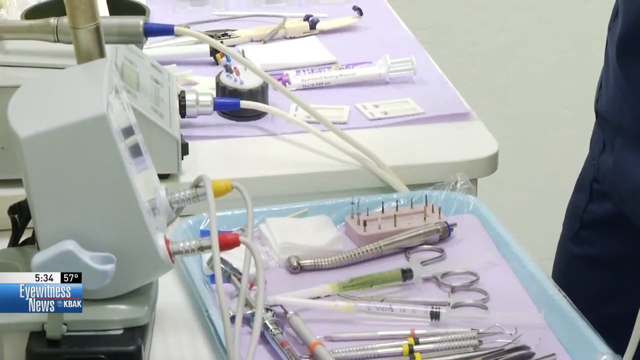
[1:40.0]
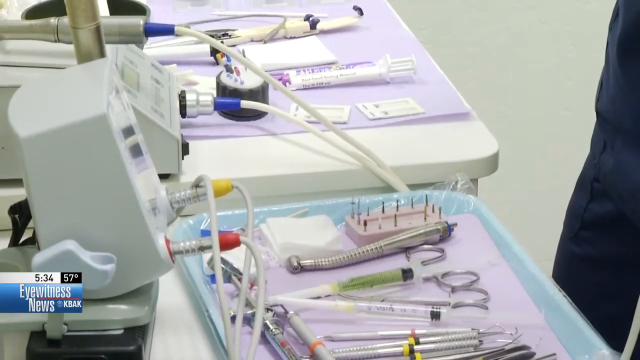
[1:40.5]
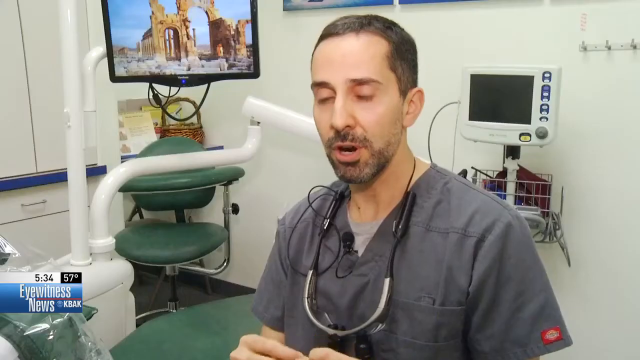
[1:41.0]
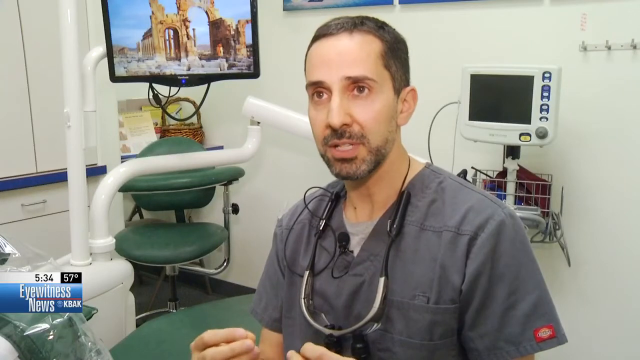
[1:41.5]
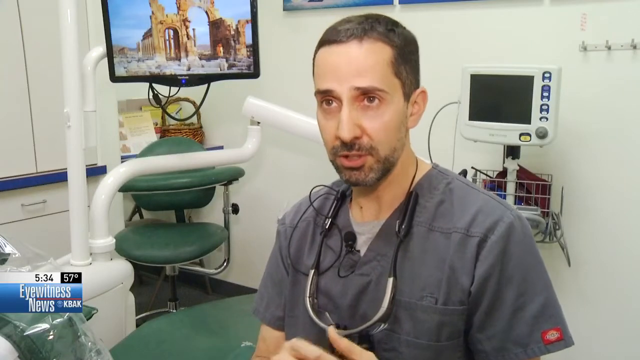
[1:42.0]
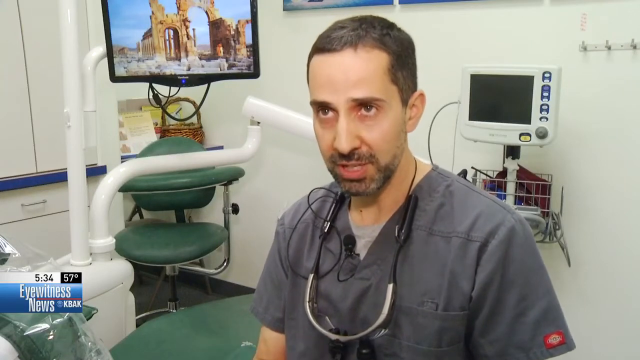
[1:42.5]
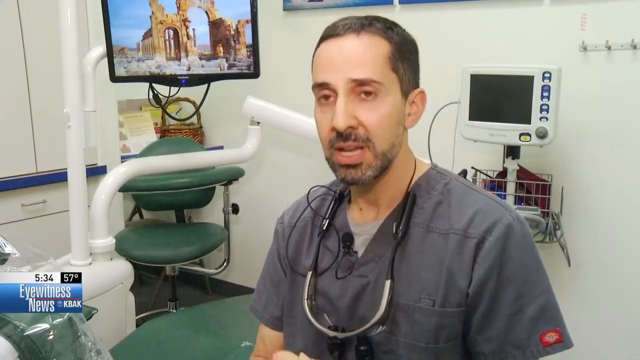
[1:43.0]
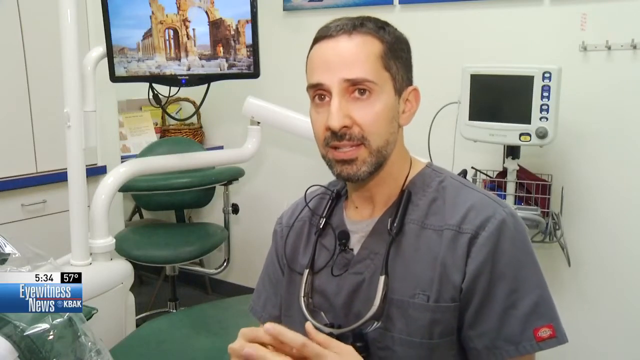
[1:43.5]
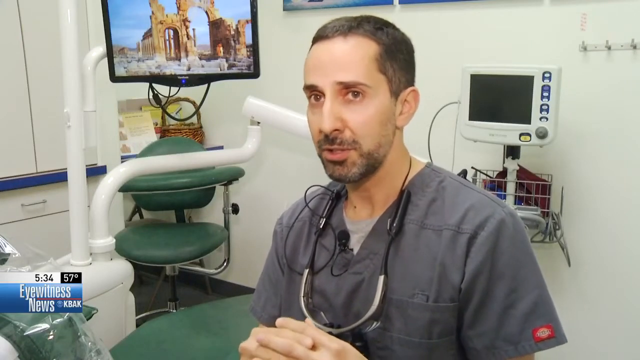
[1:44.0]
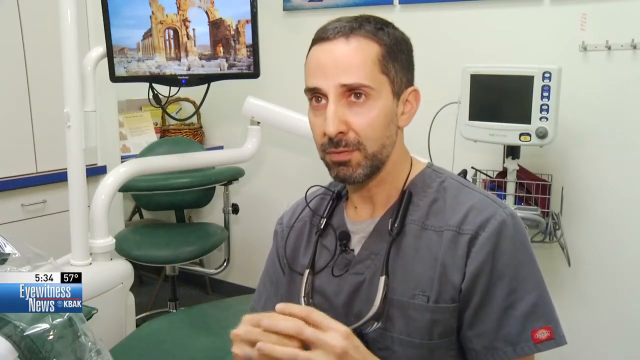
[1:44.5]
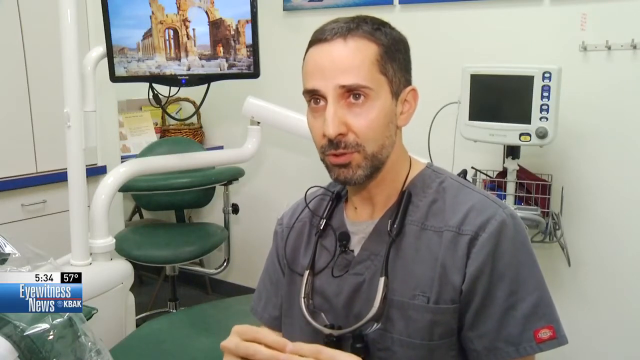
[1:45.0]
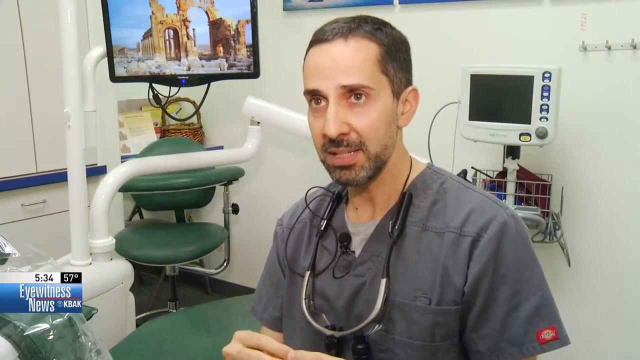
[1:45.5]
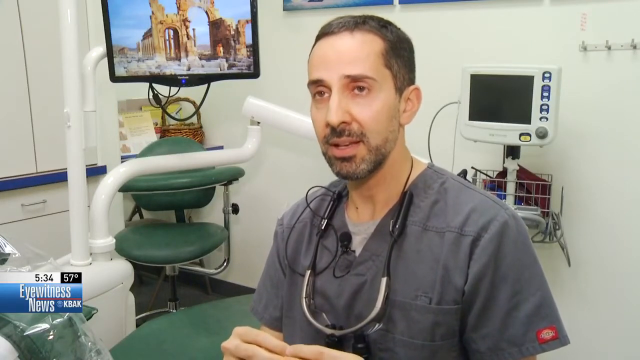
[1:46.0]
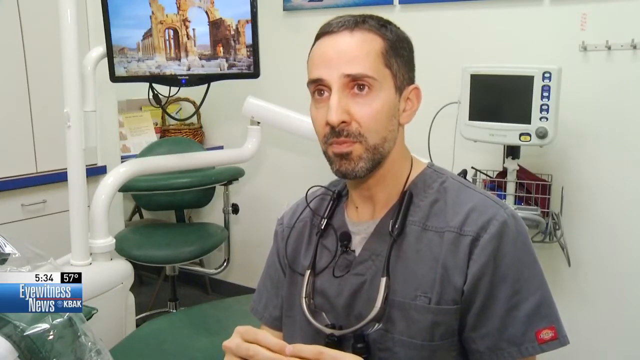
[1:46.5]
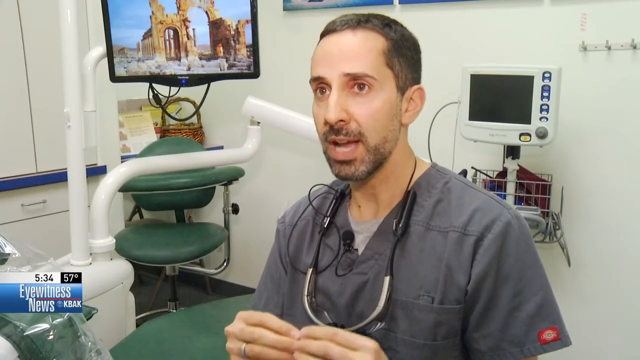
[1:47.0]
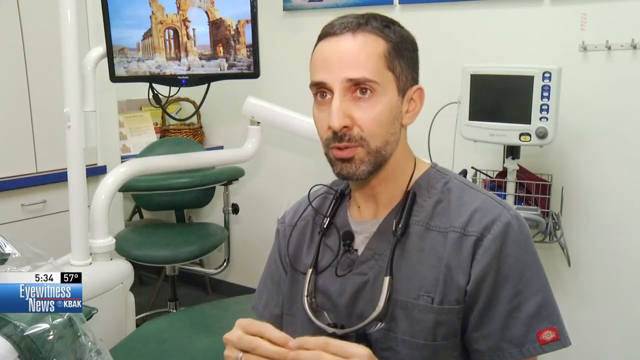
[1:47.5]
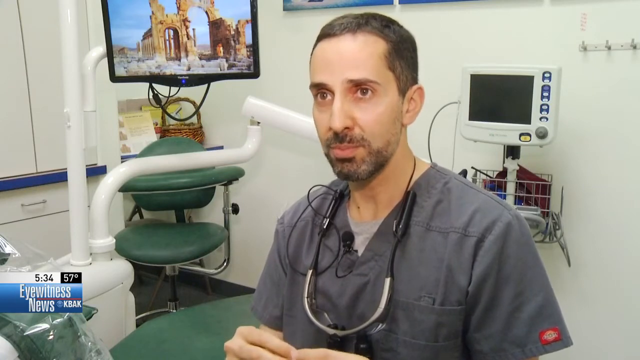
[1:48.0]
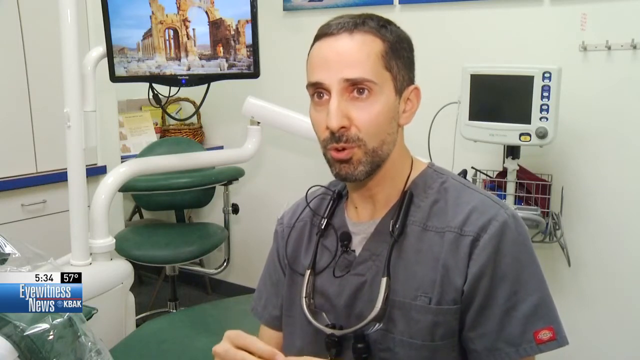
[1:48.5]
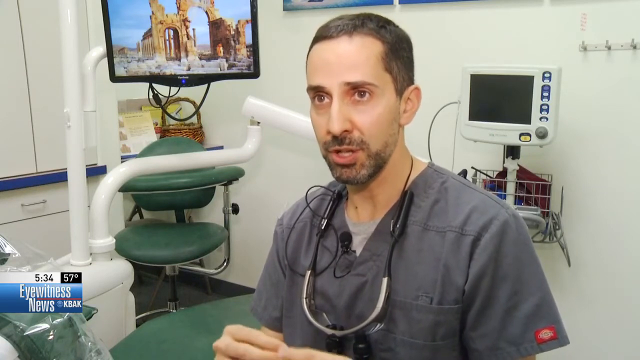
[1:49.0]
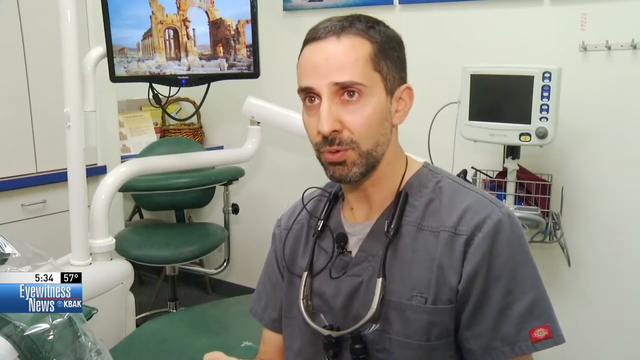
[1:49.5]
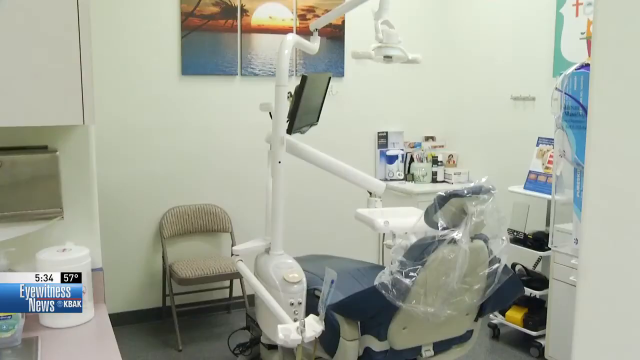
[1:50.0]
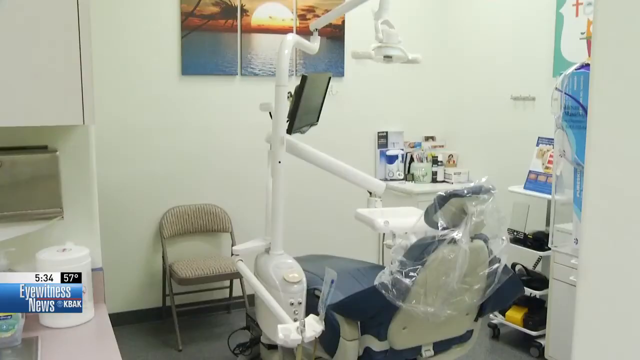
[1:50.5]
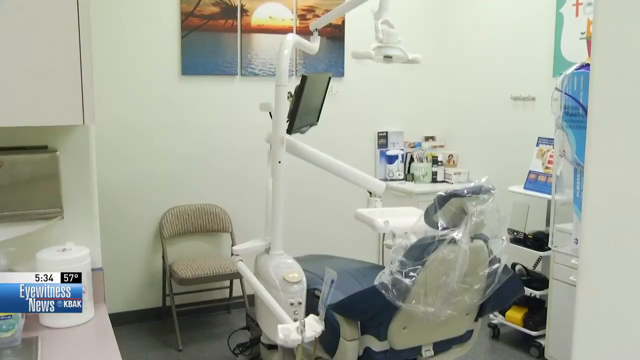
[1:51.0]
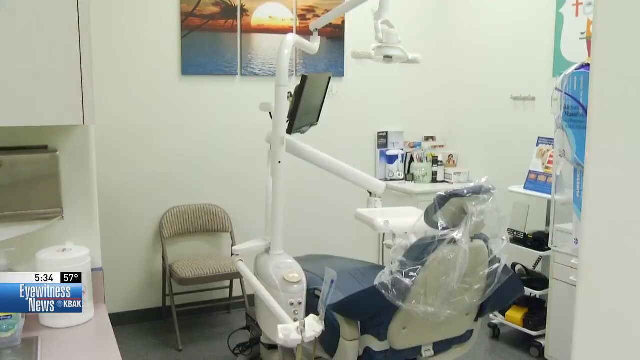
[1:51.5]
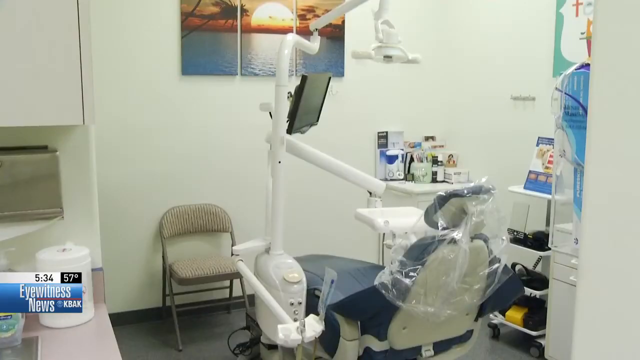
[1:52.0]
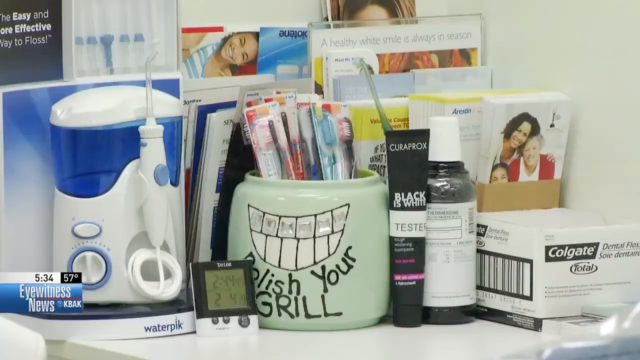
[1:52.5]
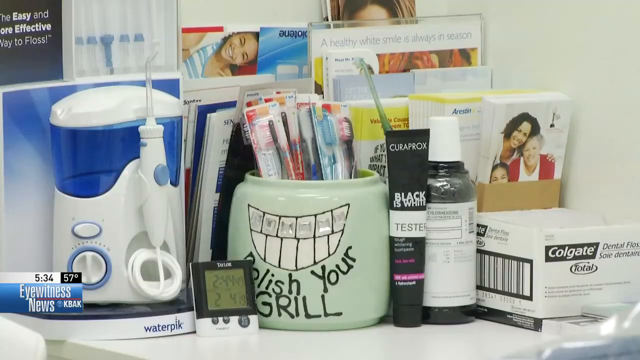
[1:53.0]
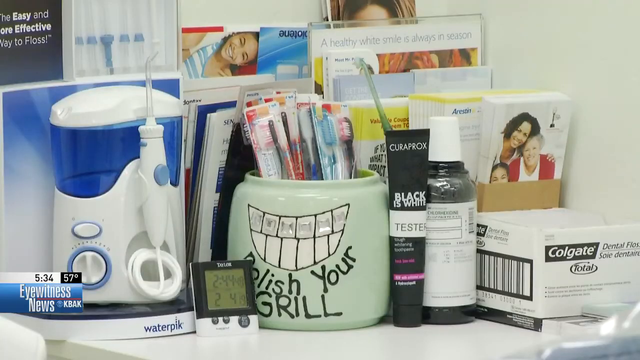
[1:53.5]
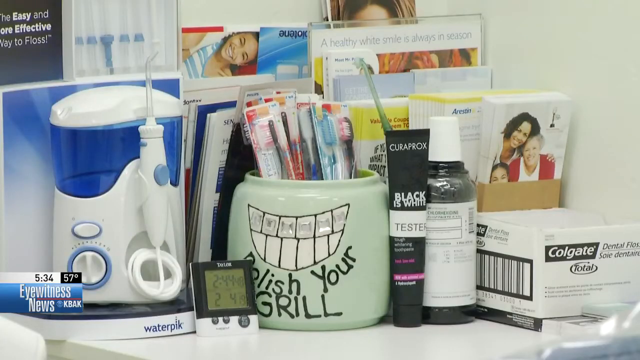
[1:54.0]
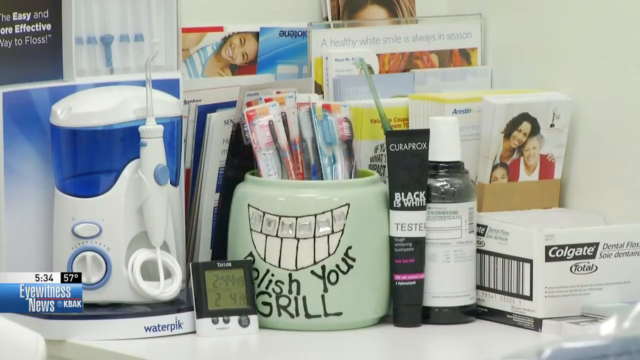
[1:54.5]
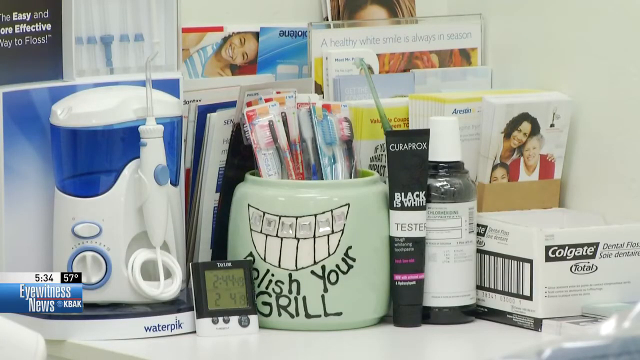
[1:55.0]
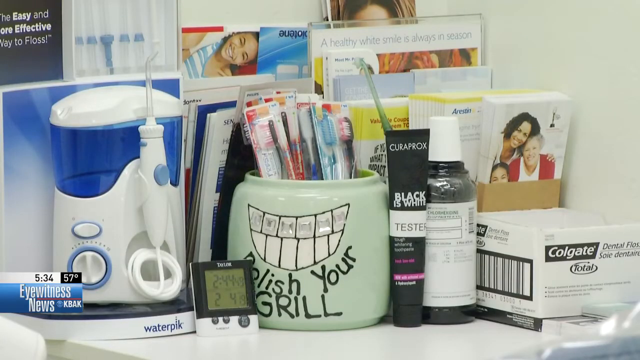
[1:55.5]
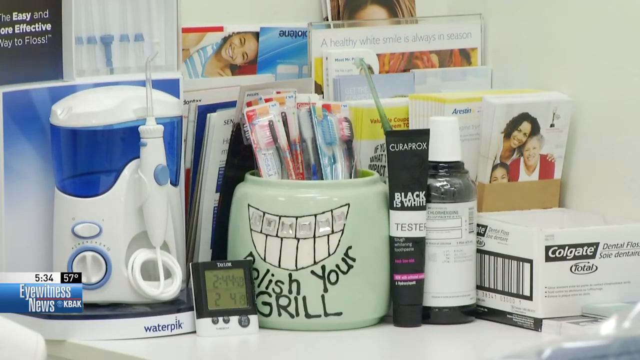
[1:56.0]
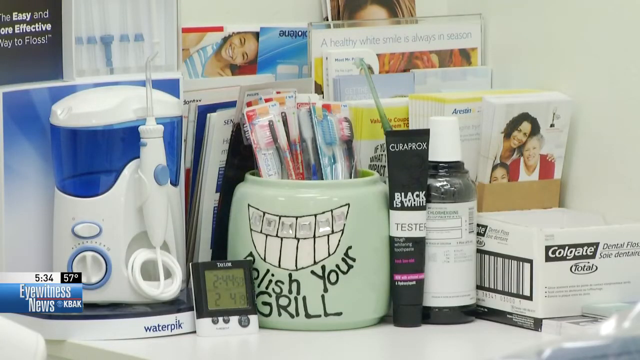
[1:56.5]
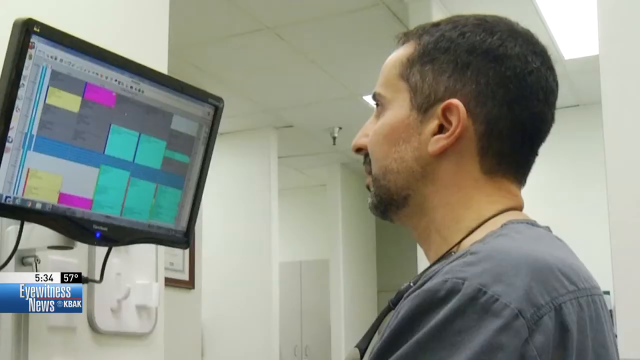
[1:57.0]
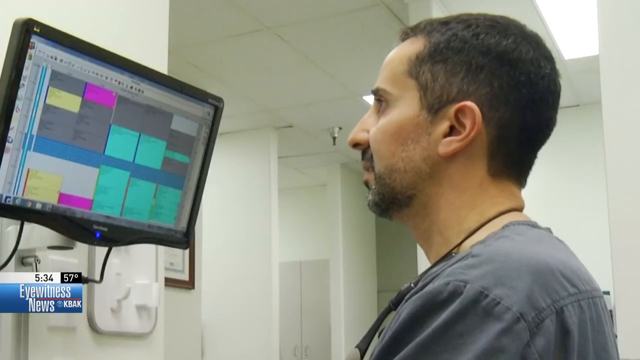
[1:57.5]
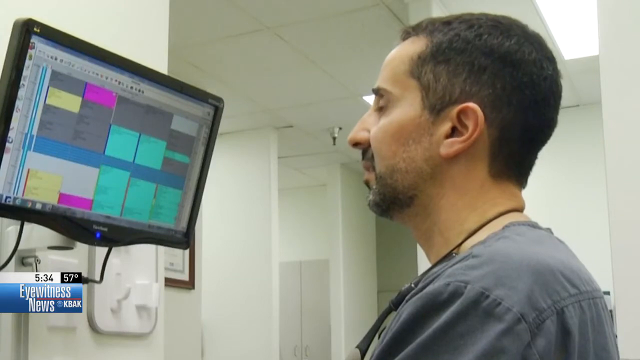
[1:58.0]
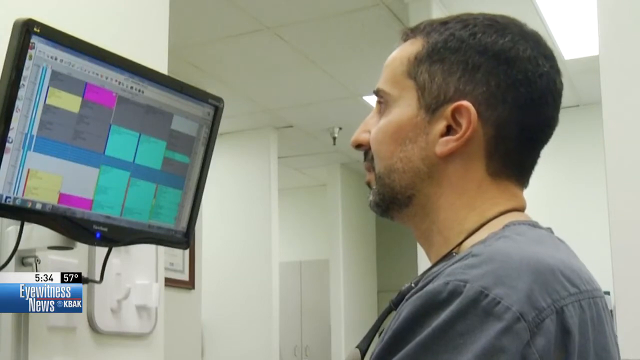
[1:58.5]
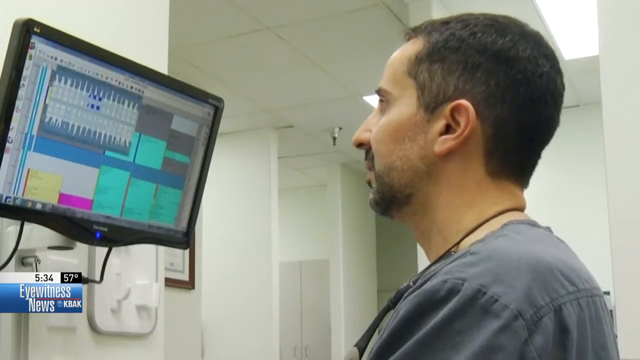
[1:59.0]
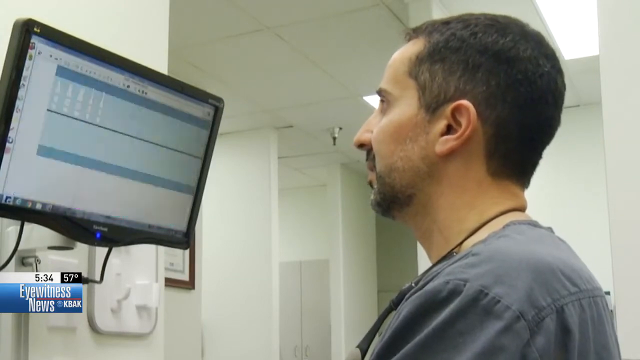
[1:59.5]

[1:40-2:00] The camera is focused on a counter with a machine on the left side and dental tools laid out on a tray. A man sits facing the camera at a slight angle, speaking and nodding, gesturing with both hands, fingers meeting in the middle, moving them up and down to emphasize his words. Next is a view of an empty dentist office room: an examination chair has a clear plastic cover over just its top part, and a white structure has a large white tube, a lamp hanging down over the chair, a black screen, and another white bar extended at an angle. A new view shows items sitting on a flat surface: a decorative container with toothbrushes in it, brochures and informational booklets, and a water pick on the right. Then the man, seen from the shoulders up, looks at a monitor on the wall, slowly turning his head back and forth a little.